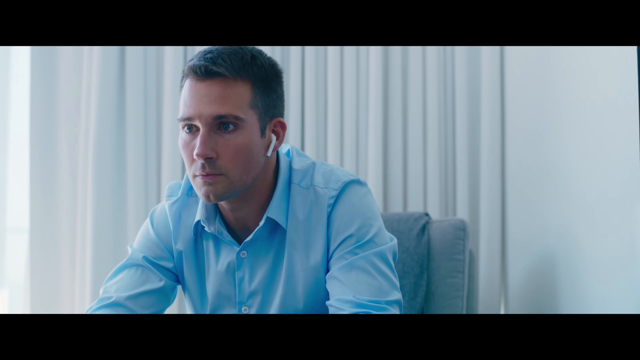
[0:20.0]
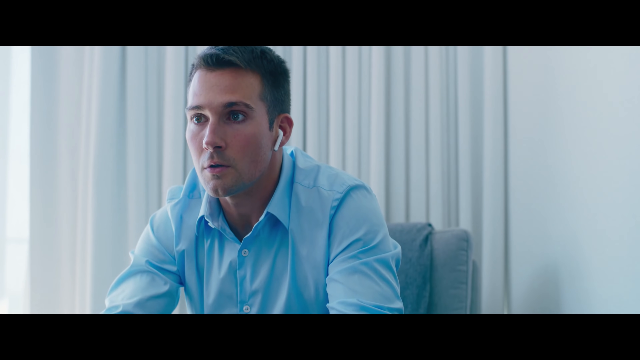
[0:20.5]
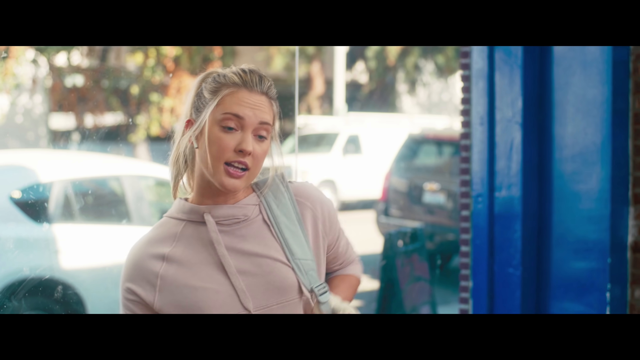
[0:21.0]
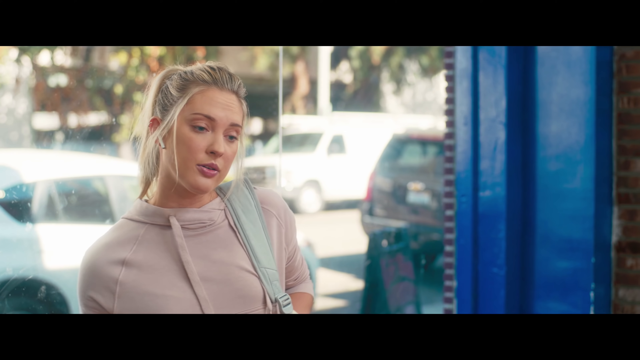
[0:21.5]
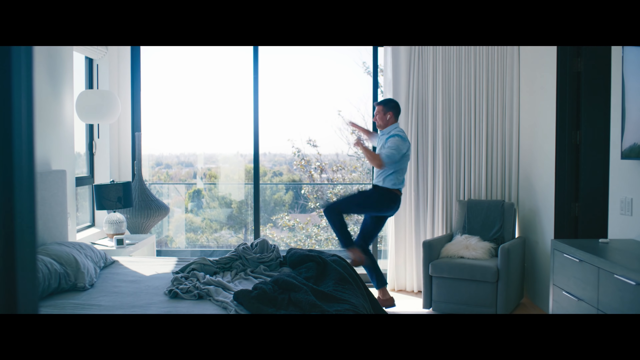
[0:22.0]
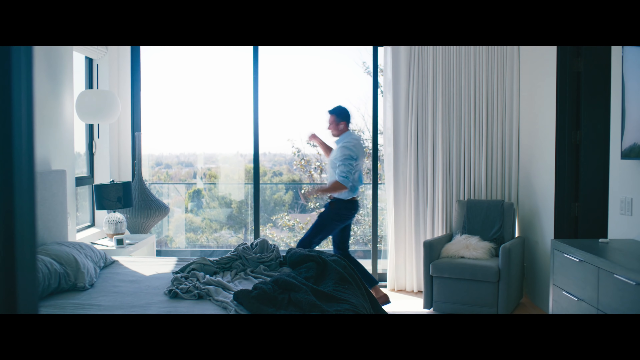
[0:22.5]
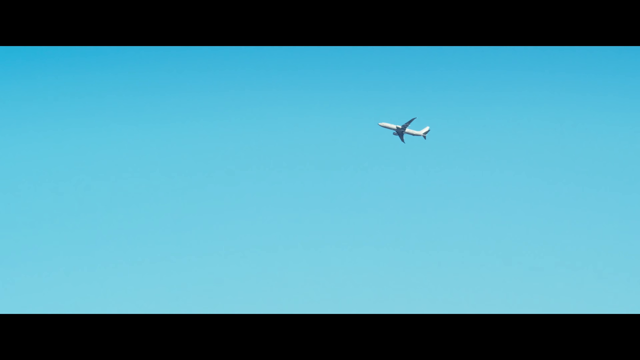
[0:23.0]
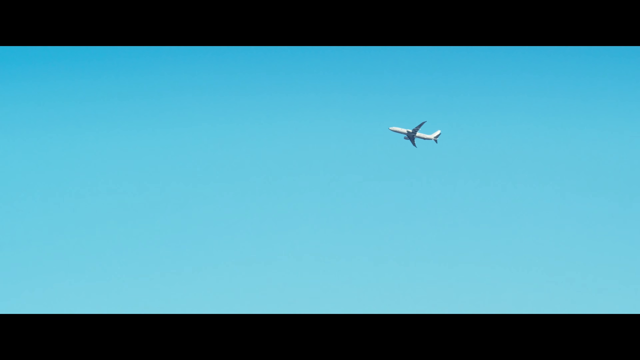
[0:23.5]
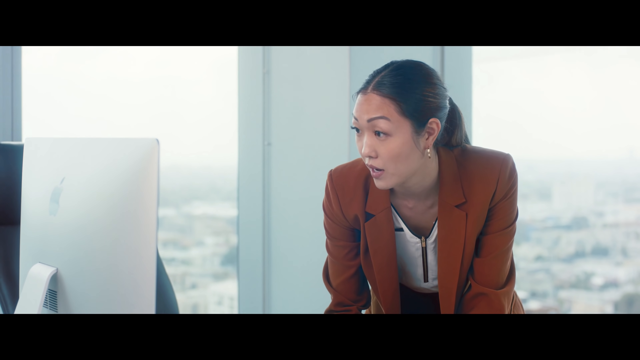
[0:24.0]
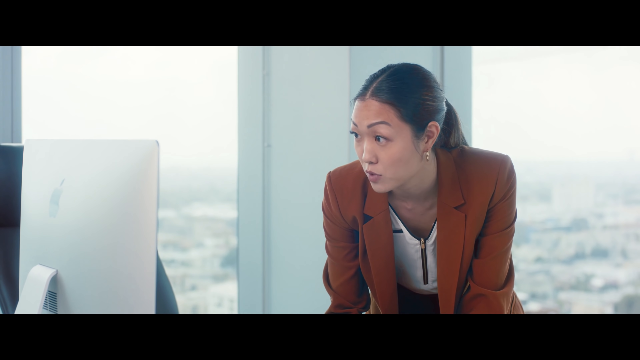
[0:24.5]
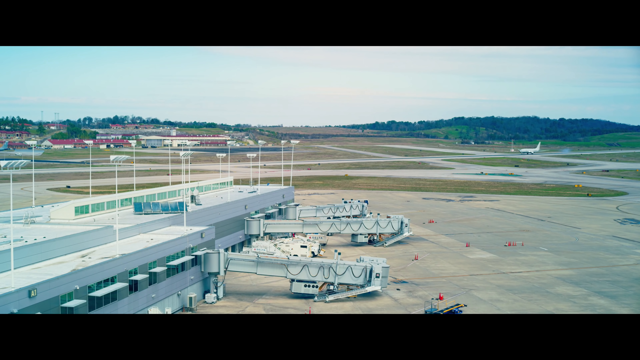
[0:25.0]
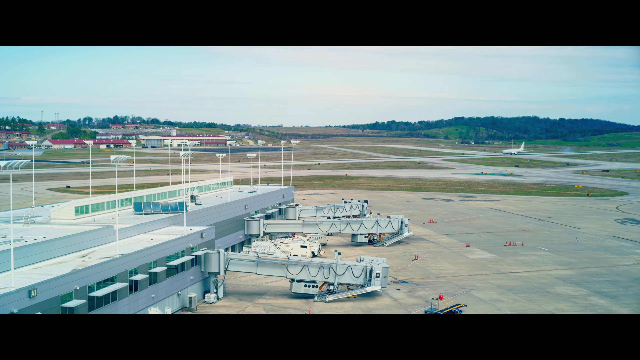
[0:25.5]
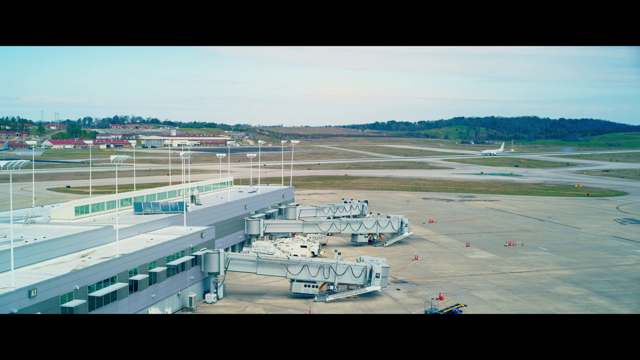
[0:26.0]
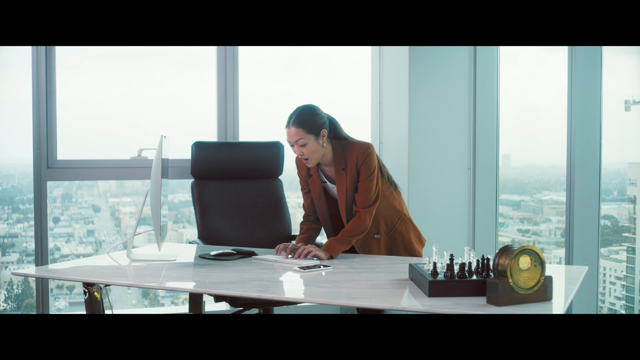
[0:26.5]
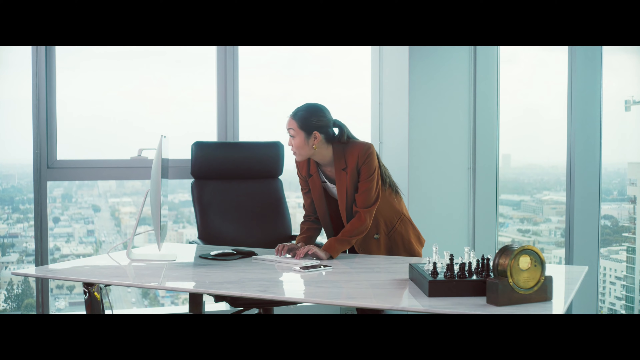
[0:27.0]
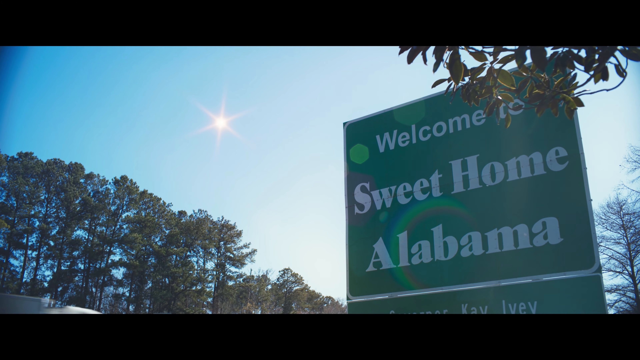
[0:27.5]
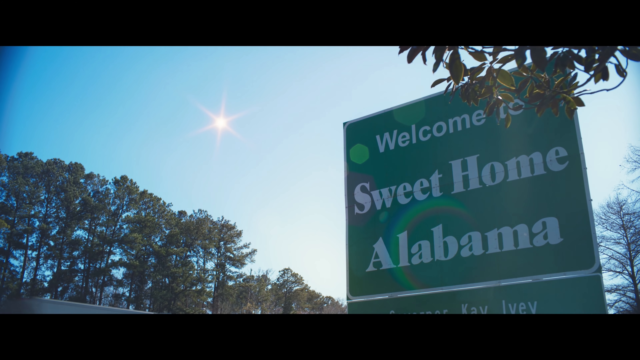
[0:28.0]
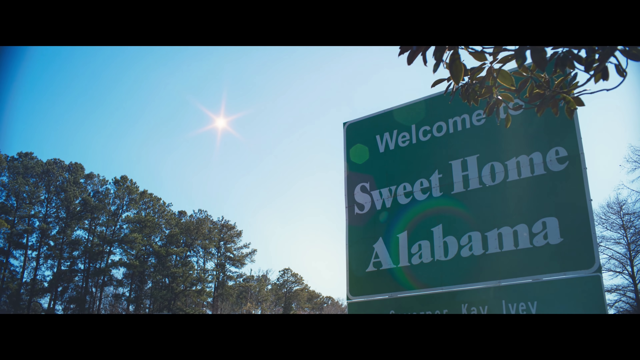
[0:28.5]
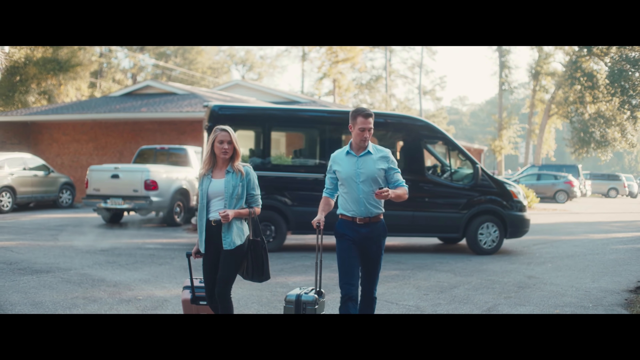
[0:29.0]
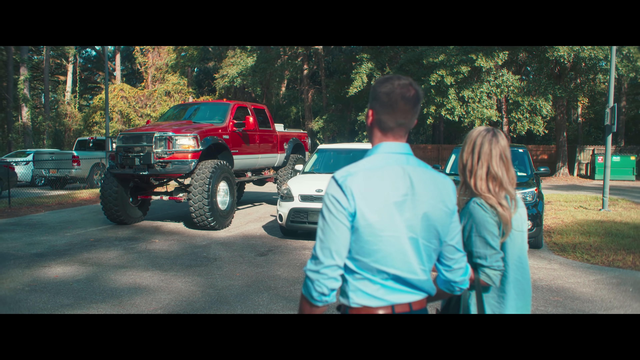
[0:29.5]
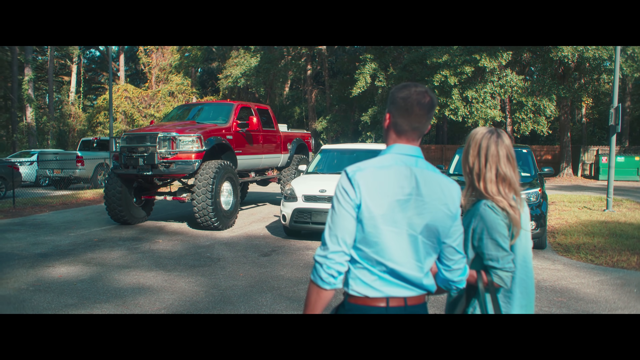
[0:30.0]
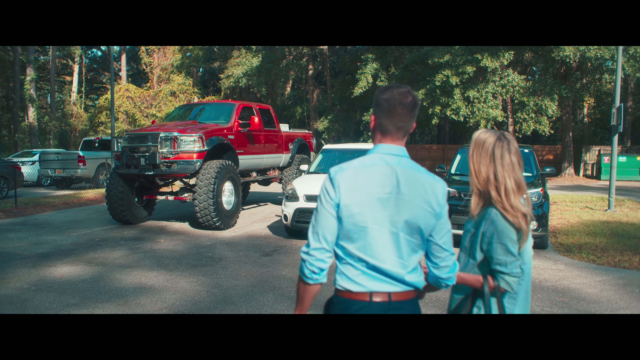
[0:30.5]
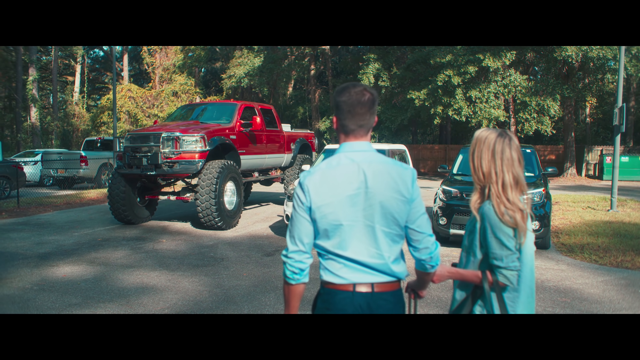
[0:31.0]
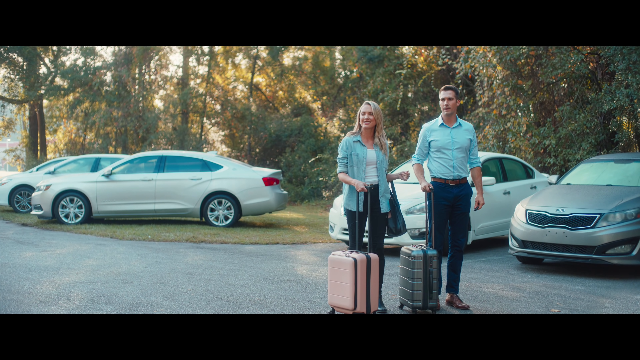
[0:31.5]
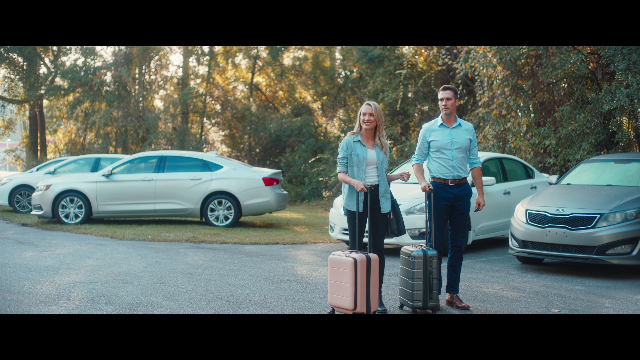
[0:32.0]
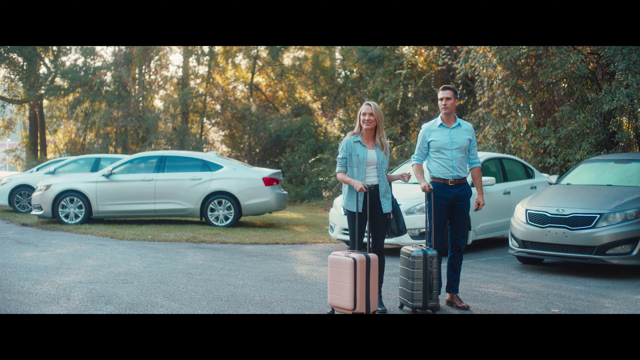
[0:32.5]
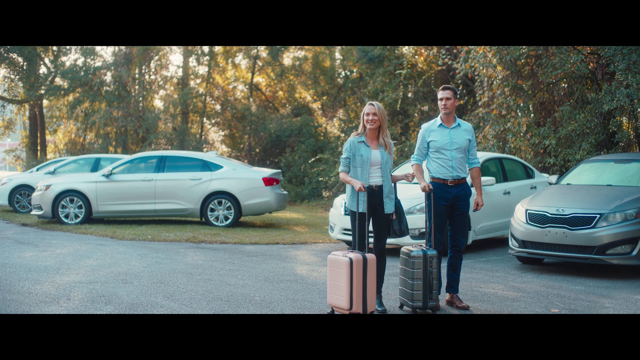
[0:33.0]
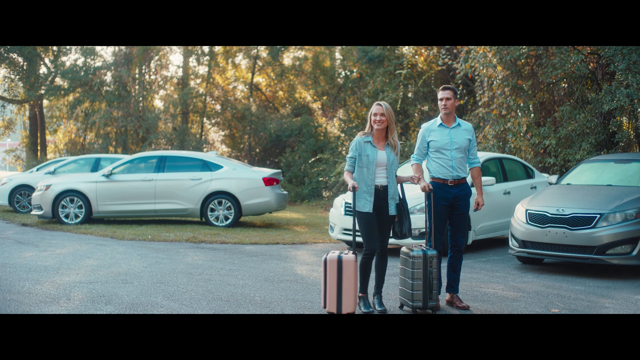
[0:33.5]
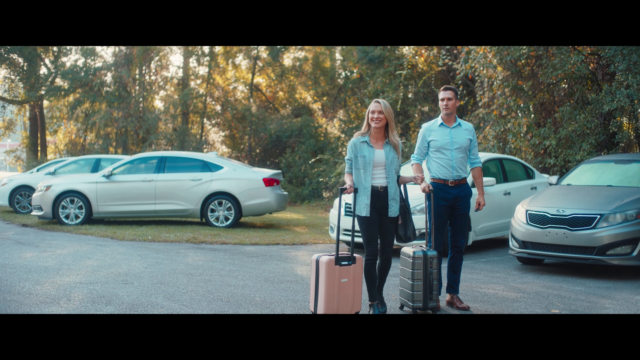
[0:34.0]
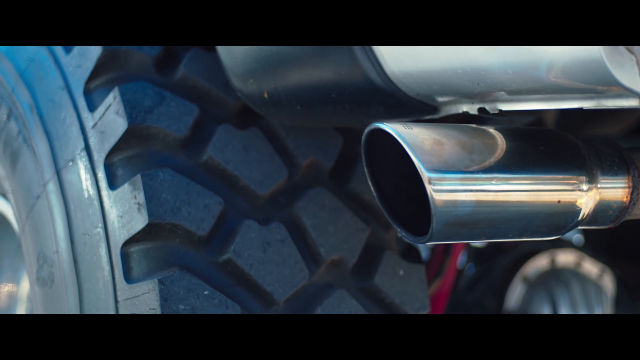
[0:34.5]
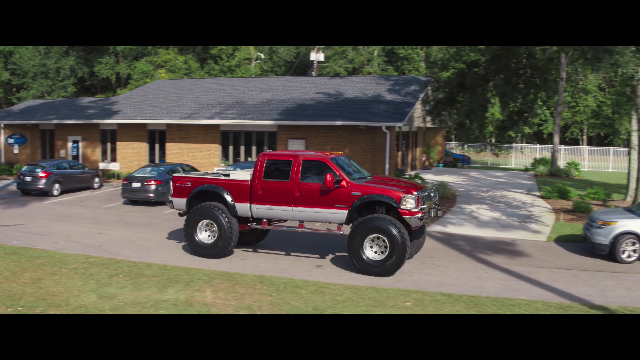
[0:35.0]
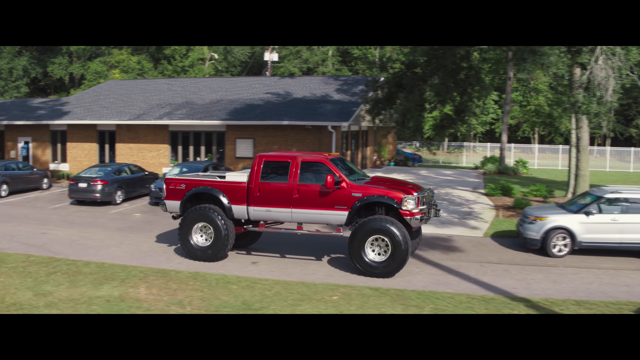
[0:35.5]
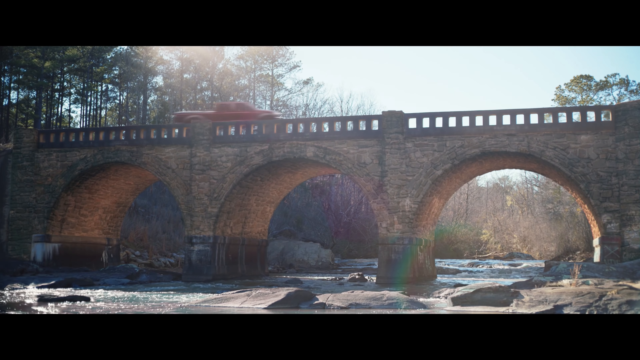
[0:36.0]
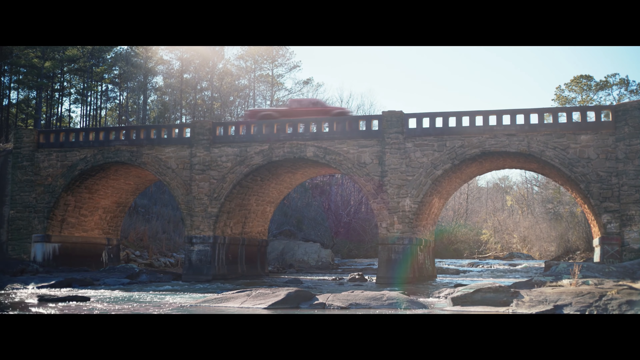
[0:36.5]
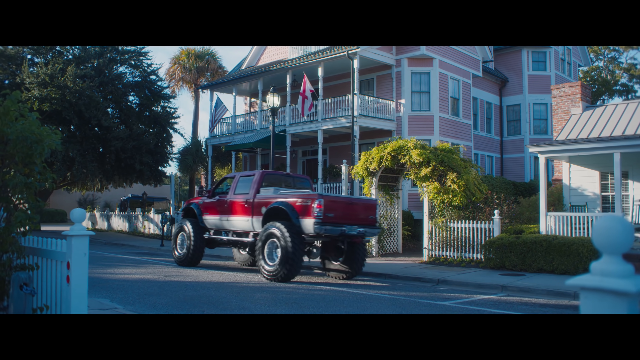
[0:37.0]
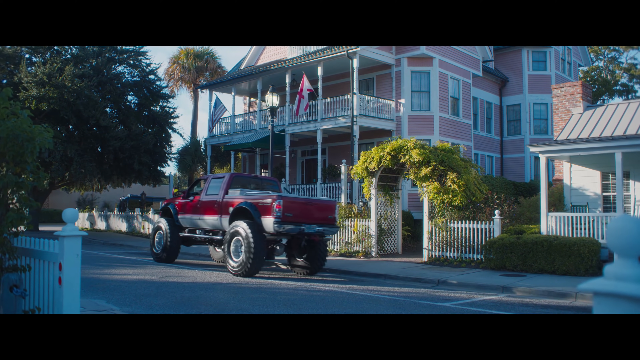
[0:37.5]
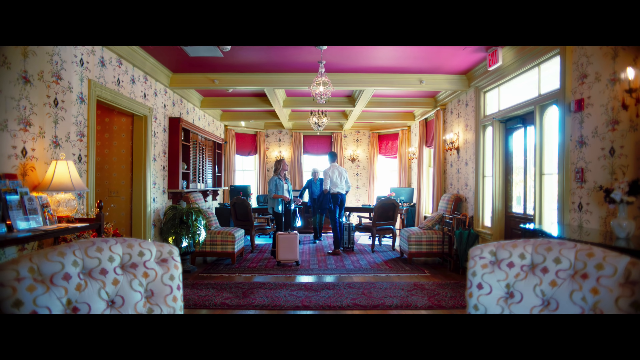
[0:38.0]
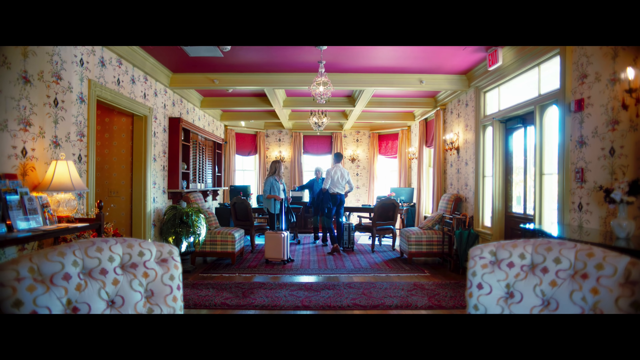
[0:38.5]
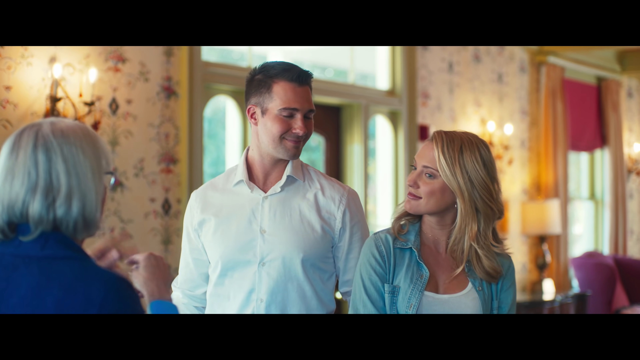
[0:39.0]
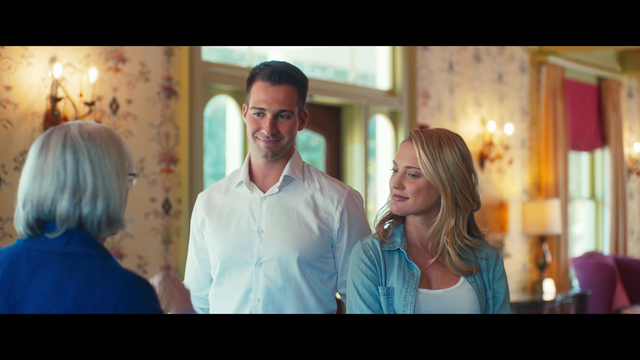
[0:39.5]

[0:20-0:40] A man wearing a white earpod and a blue shirt looks happy; he and a woman appear to be going out of town together. An old woman, who seems to be his mother or grandmother, is happy to see him with the woman.